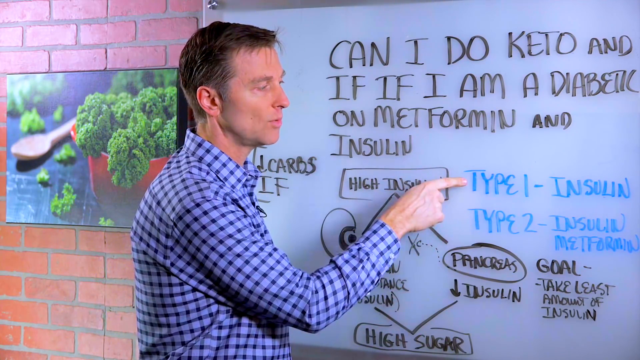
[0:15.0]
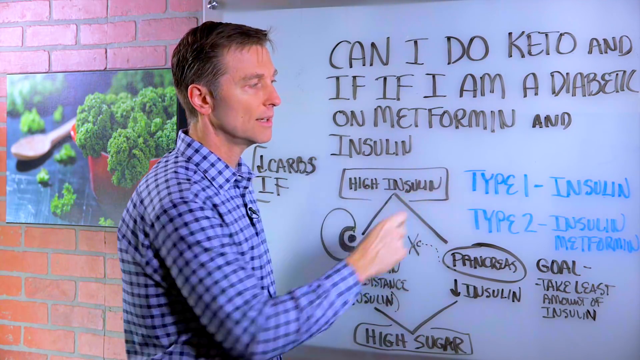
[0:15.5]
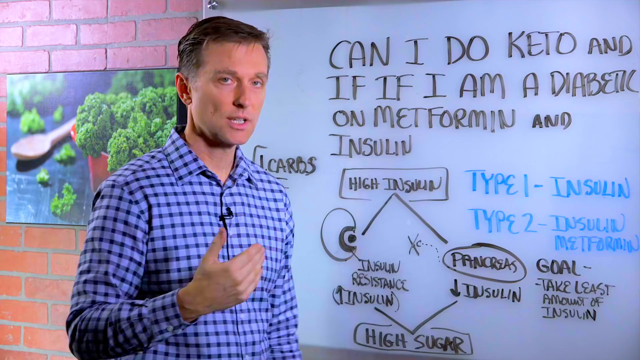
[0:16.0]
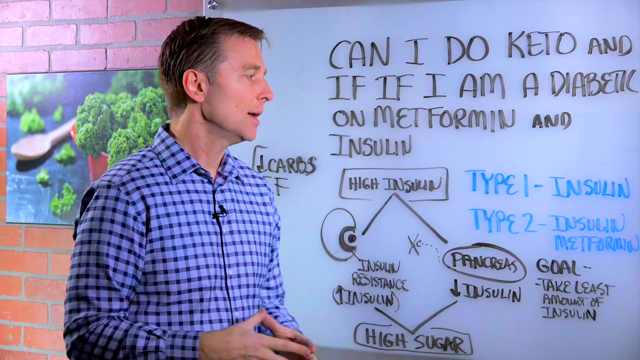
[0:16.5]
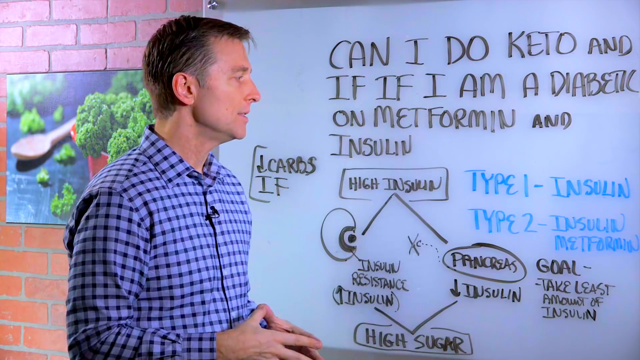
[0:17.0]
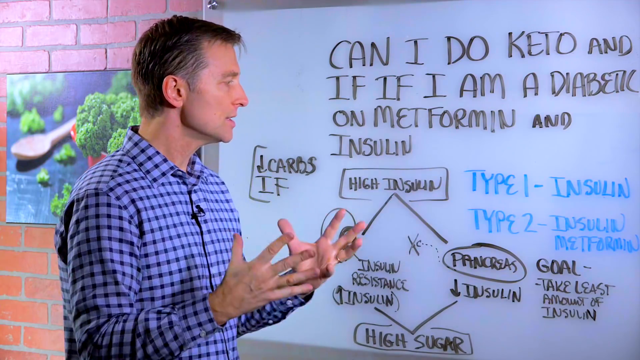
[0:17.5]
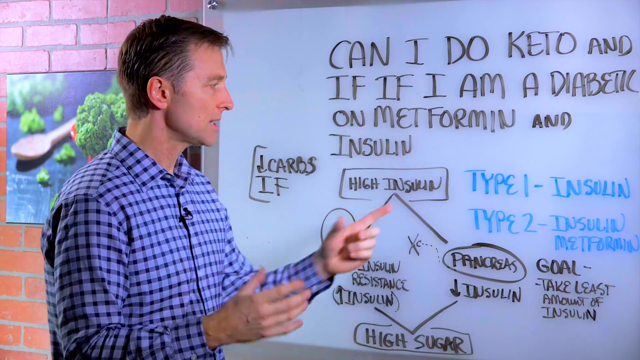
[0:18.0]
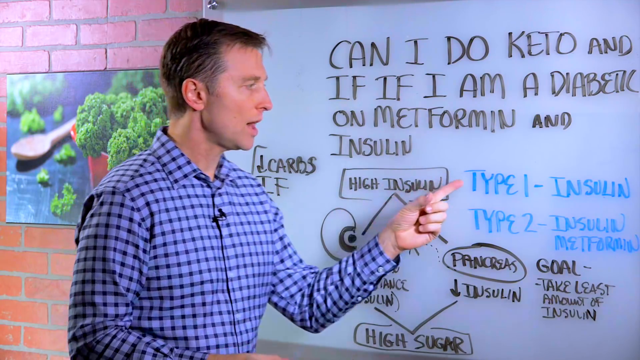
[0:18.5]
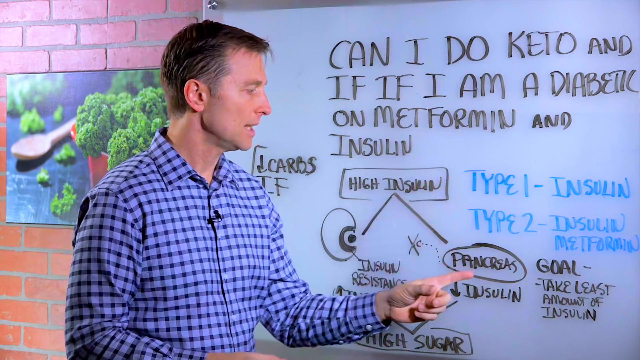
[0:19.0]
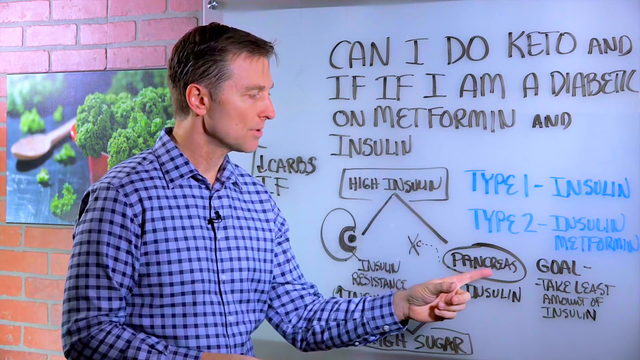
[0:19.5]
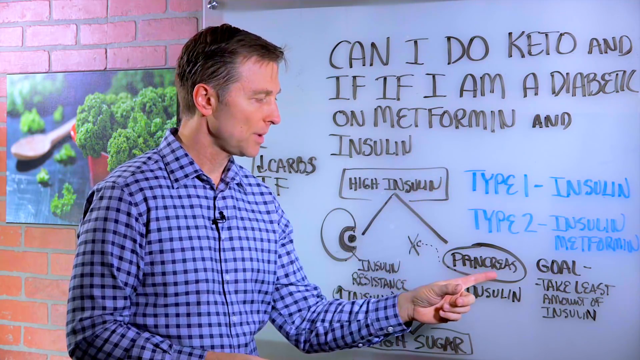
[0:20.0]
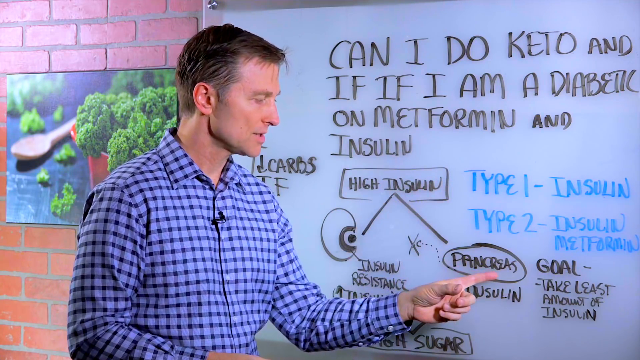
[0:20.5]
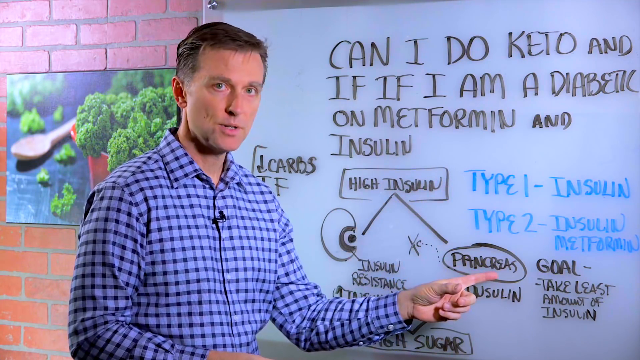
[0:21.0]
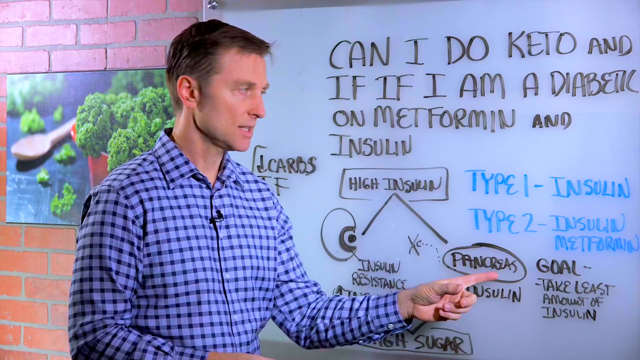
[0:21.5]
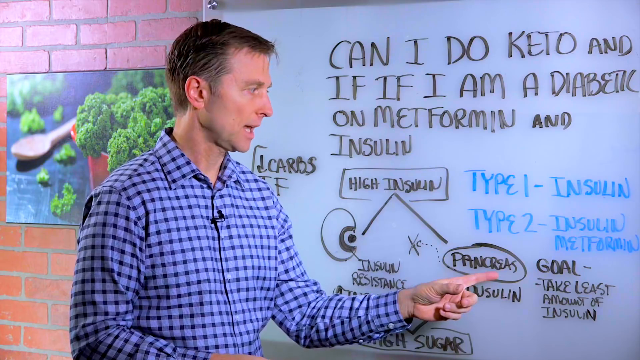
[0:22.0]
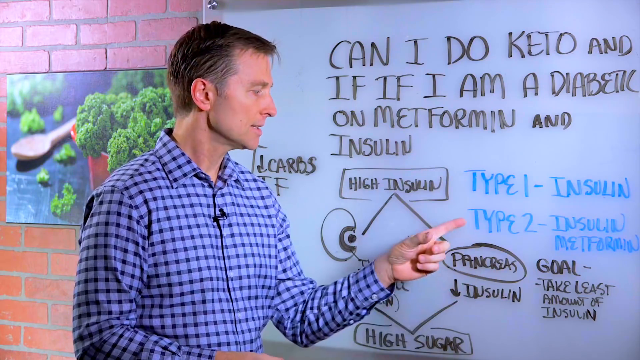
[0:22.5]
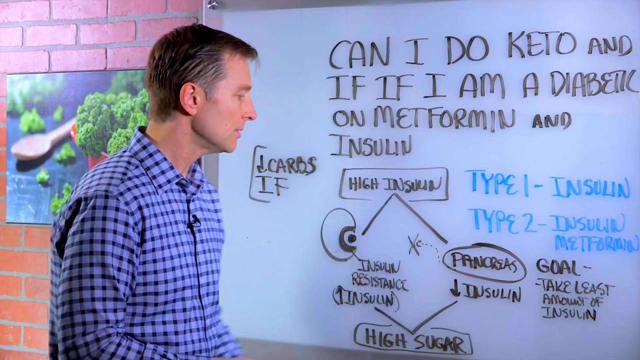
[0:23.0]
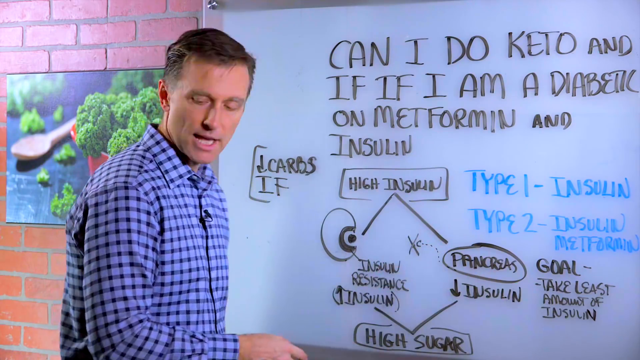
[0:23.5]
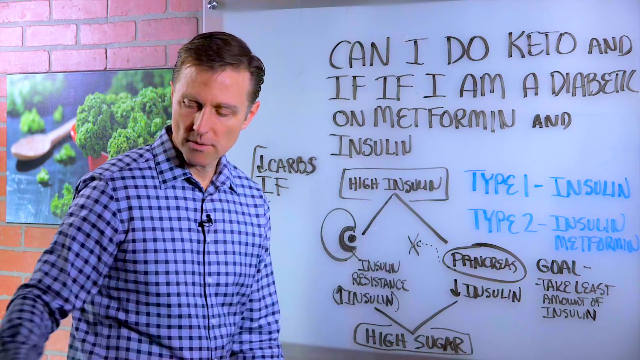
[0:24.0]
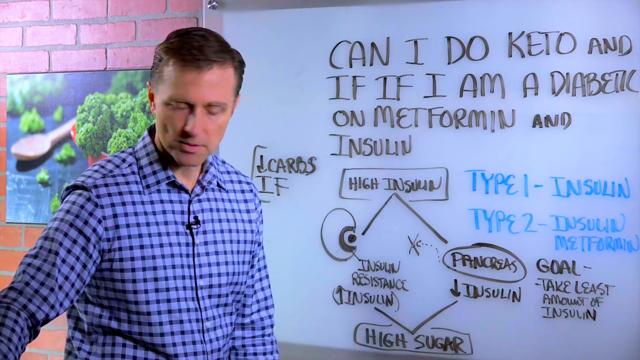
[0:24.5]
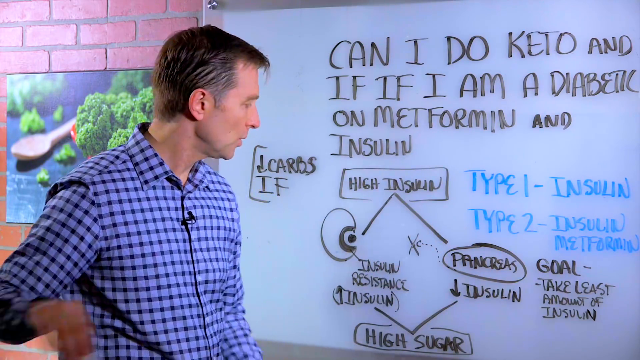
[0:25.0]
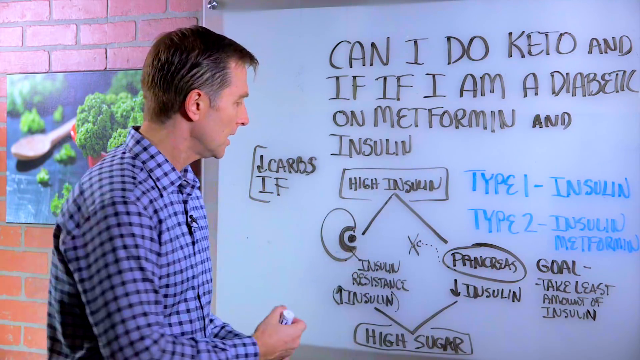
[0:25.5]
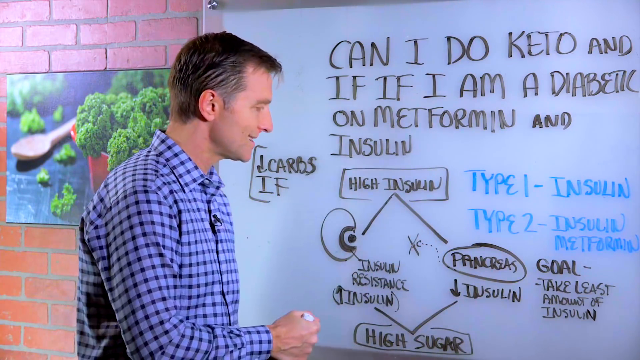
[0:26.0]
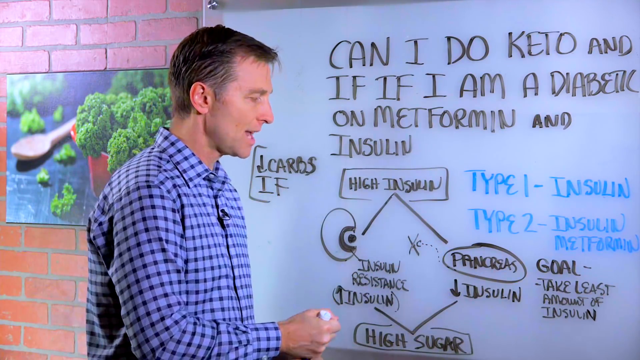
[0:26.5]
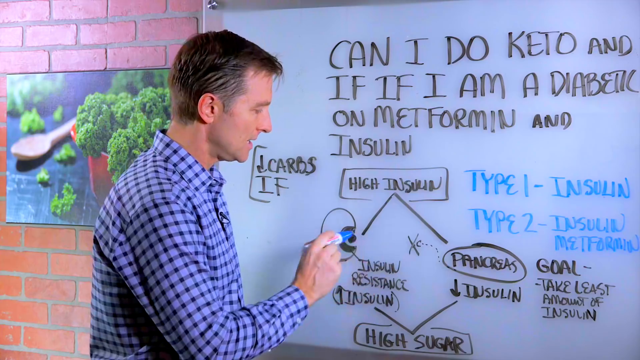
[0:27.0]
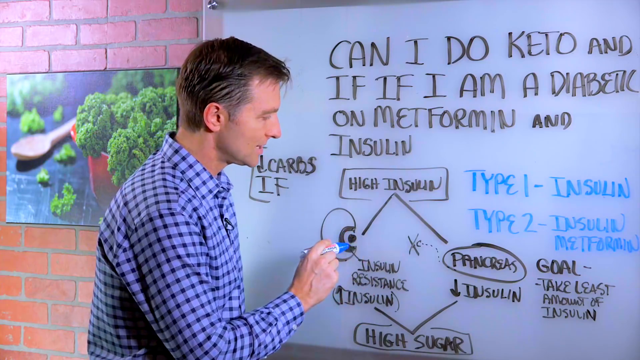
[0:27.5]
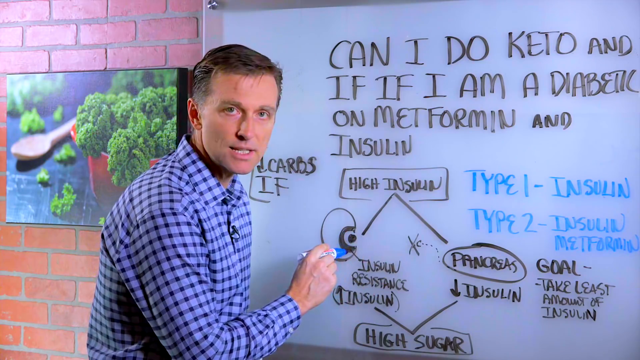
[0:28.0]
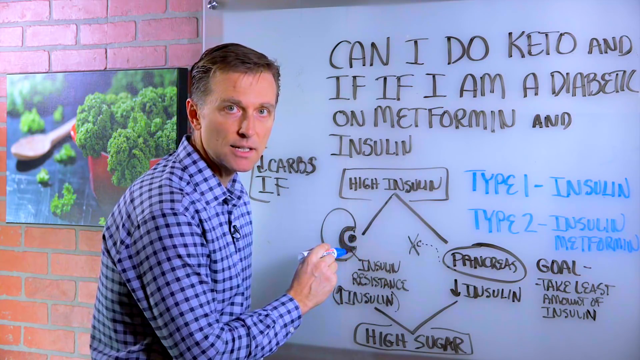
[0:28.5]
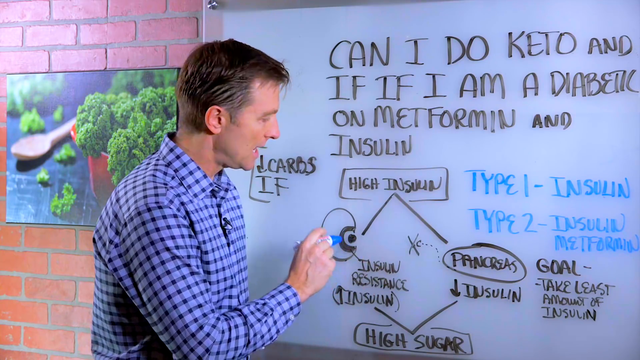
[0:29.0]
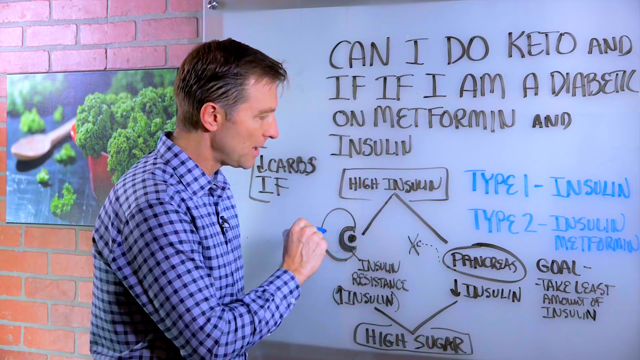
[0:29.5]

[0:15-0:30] The man keeps pointing to the whiteboard, indicating type 1 and type 2. He picks up a blue marker and points with it to where it says insulin resistance, where the insulin goes up, then to the pancreas and then to type 2. He seems to talk a lot with his hands, focusing on the part of the diagram about insulin going up.